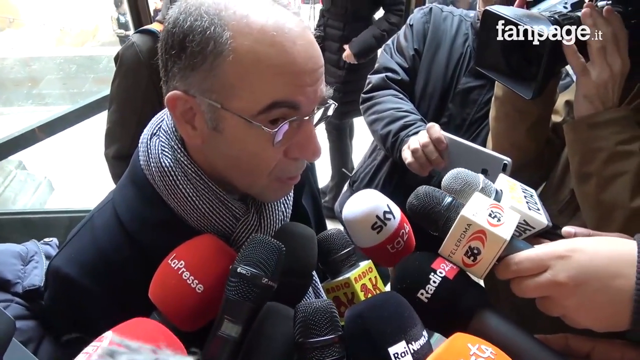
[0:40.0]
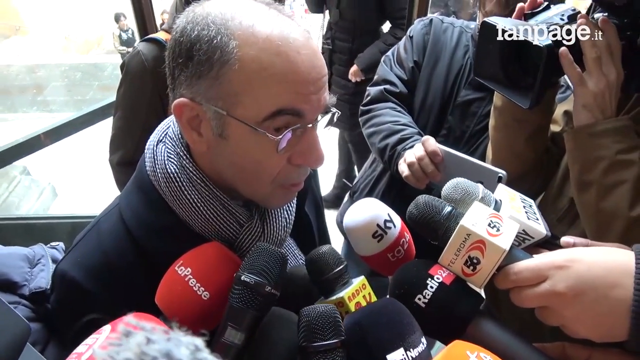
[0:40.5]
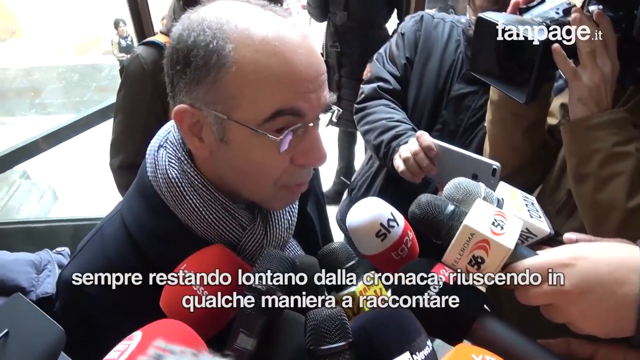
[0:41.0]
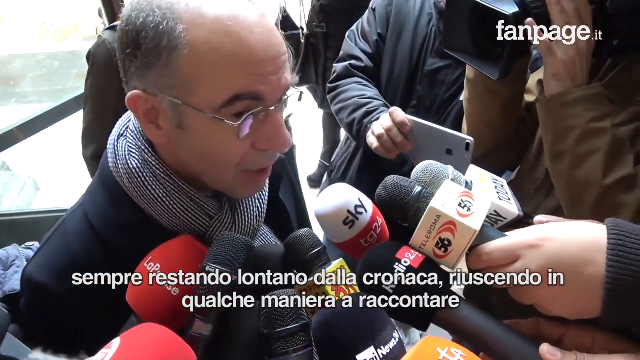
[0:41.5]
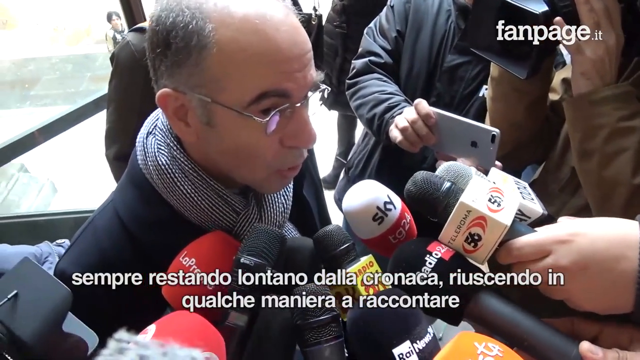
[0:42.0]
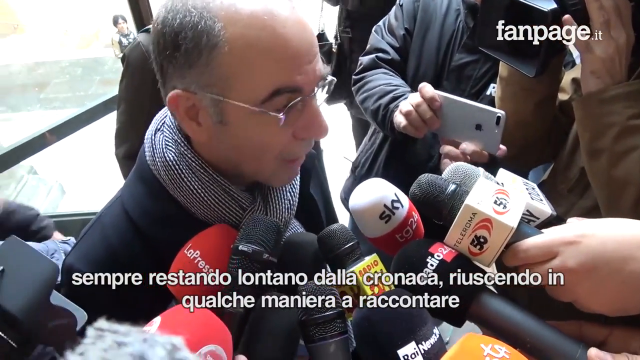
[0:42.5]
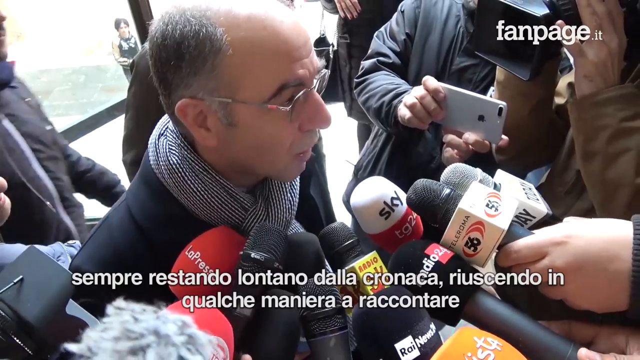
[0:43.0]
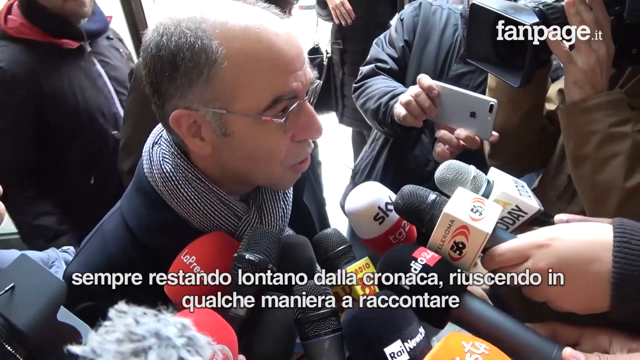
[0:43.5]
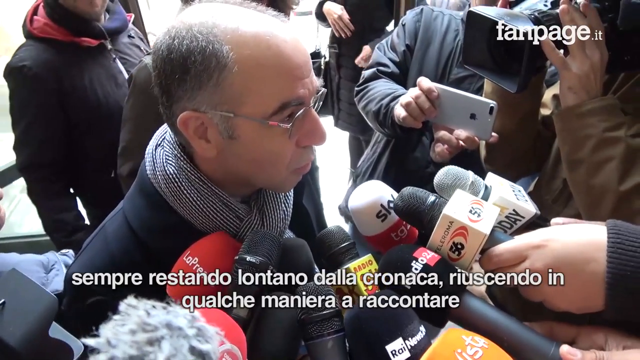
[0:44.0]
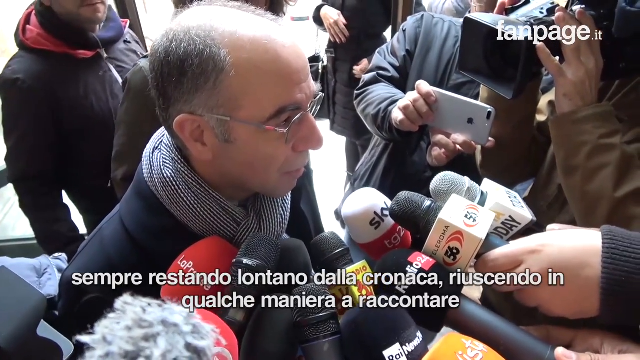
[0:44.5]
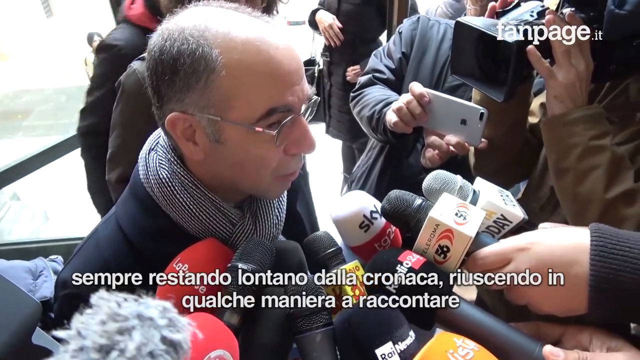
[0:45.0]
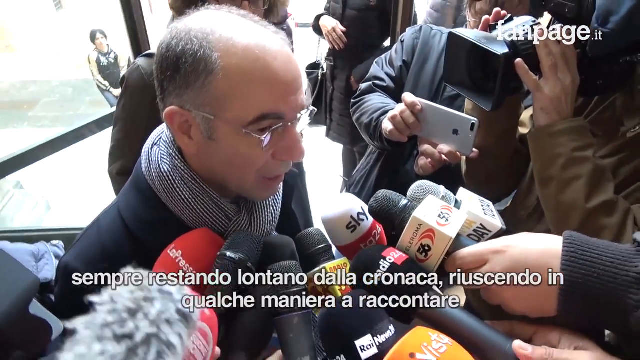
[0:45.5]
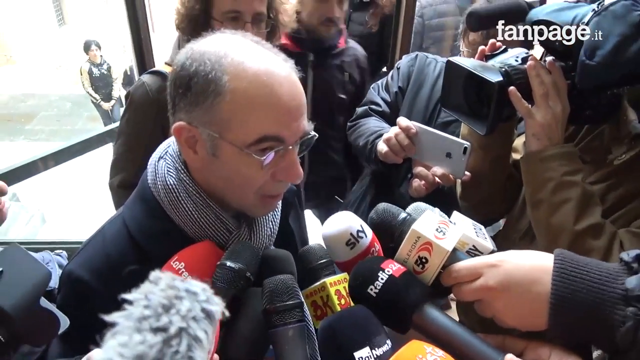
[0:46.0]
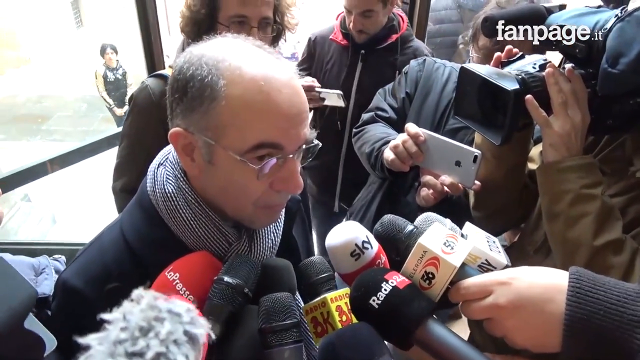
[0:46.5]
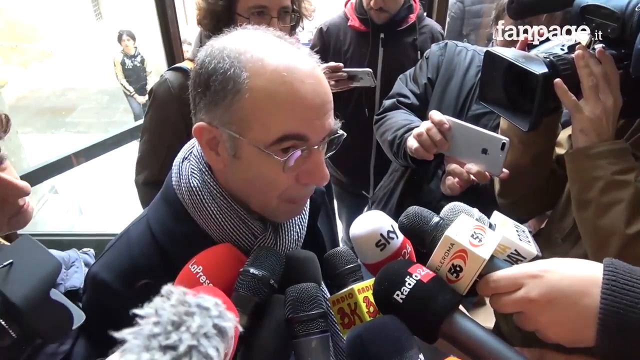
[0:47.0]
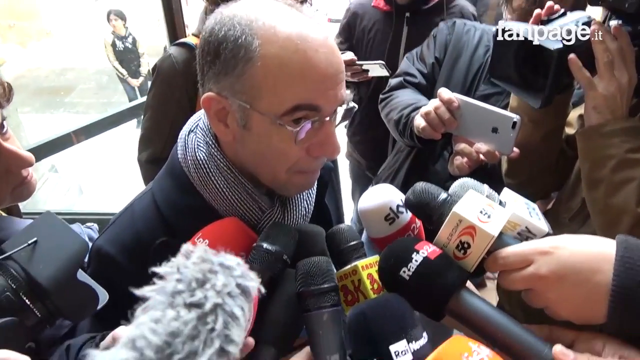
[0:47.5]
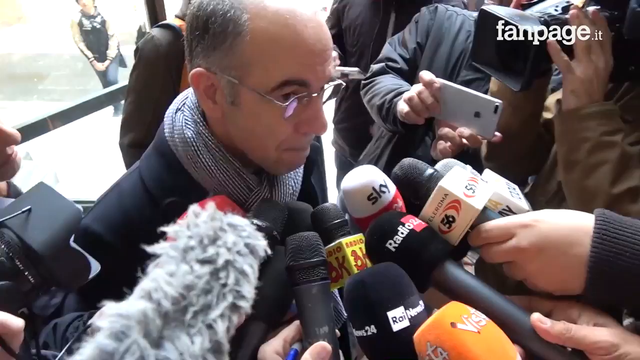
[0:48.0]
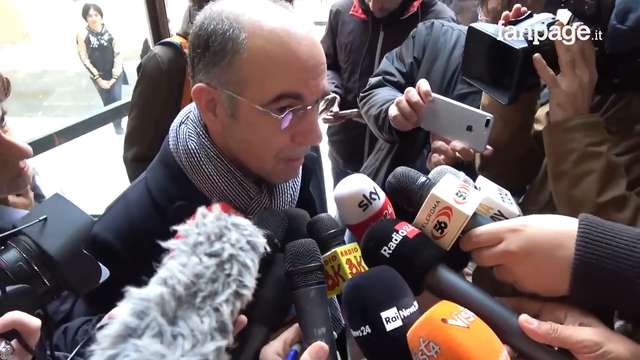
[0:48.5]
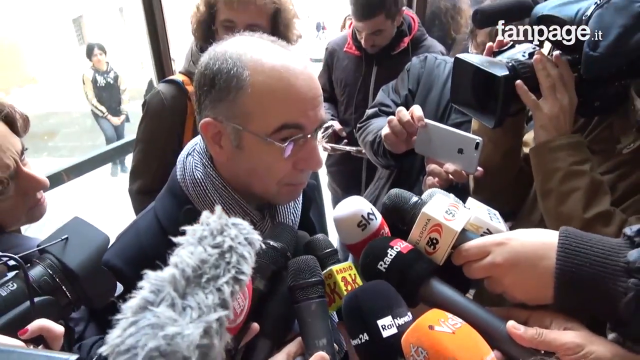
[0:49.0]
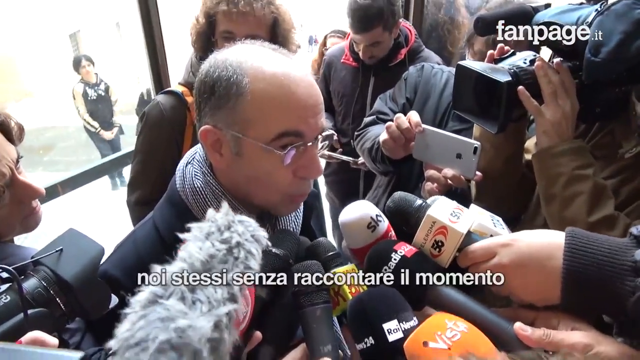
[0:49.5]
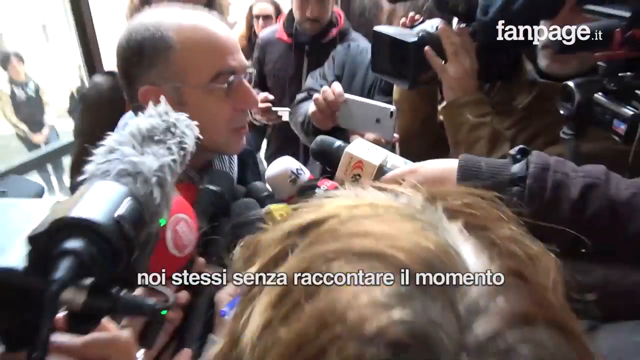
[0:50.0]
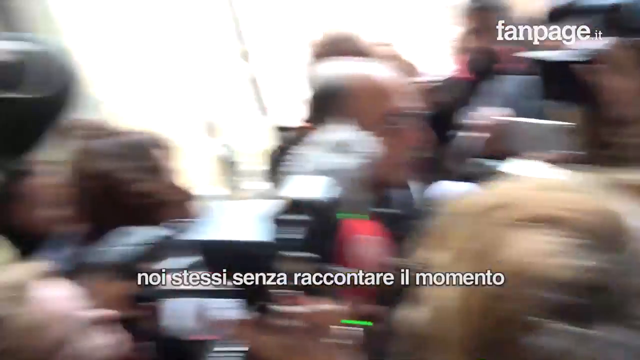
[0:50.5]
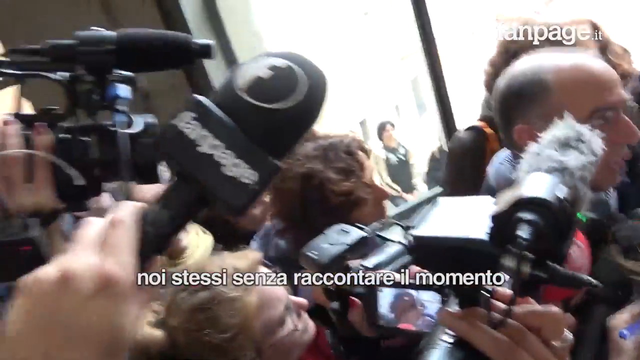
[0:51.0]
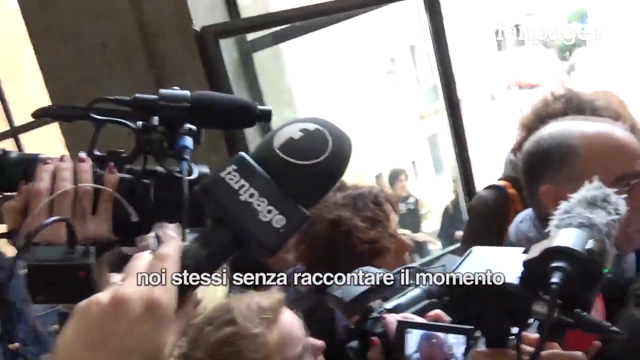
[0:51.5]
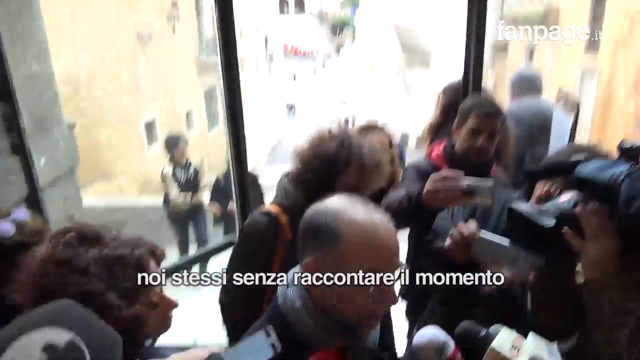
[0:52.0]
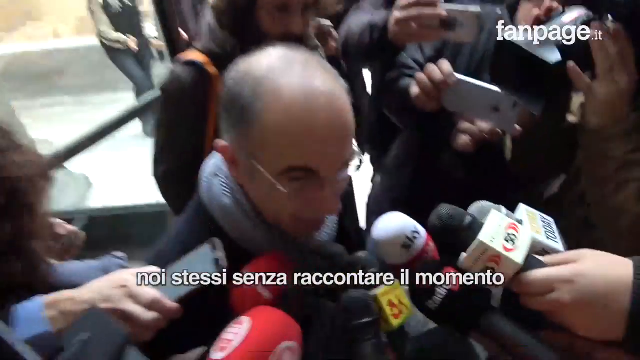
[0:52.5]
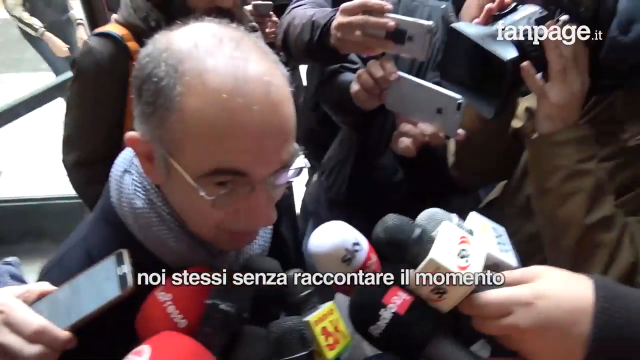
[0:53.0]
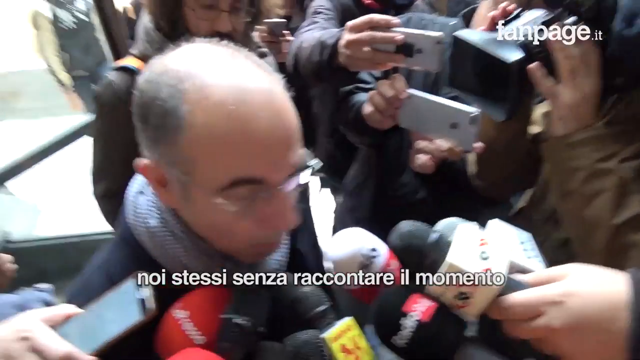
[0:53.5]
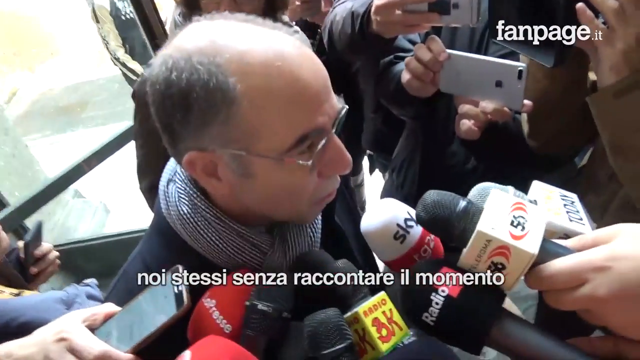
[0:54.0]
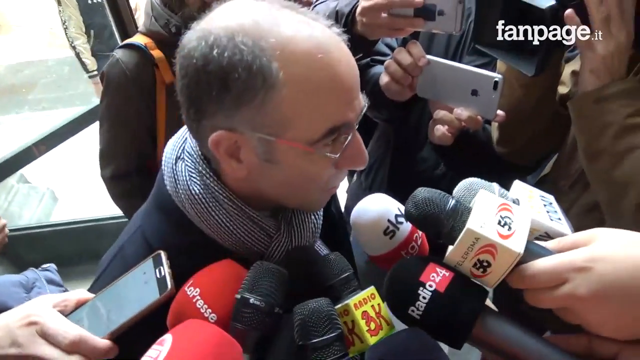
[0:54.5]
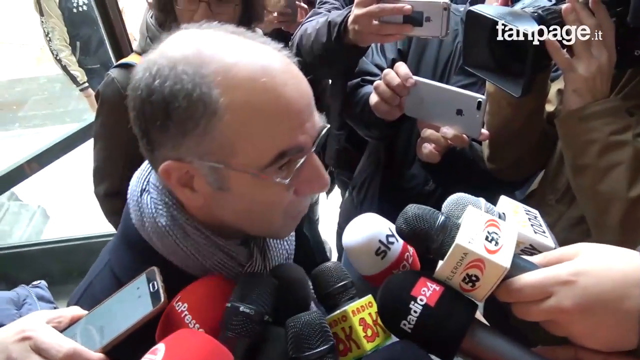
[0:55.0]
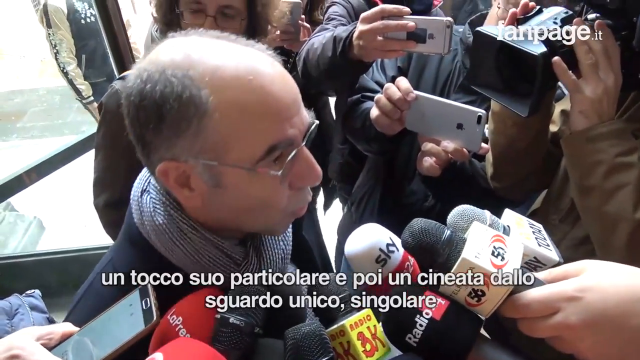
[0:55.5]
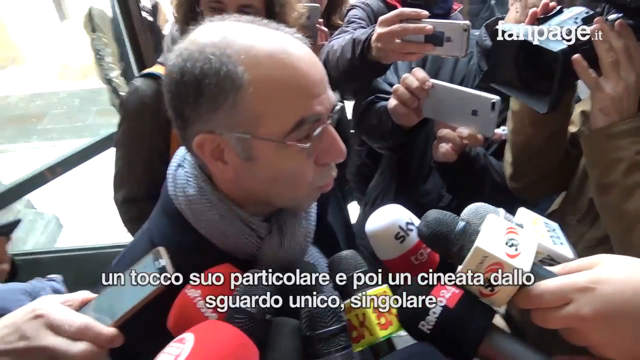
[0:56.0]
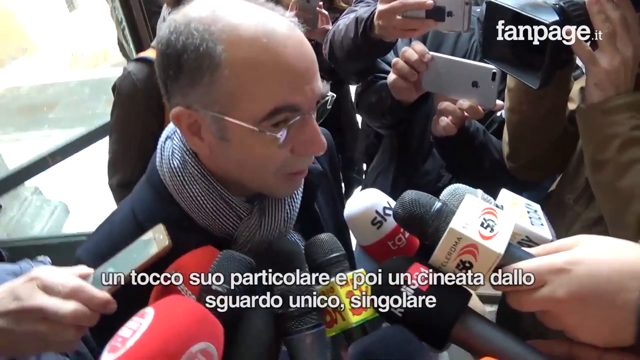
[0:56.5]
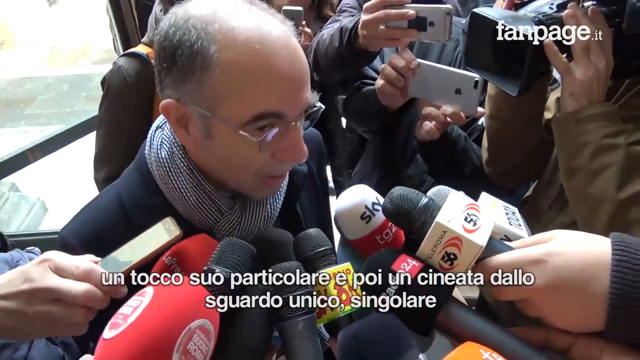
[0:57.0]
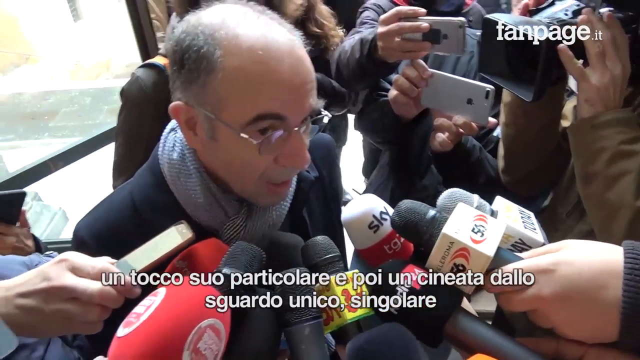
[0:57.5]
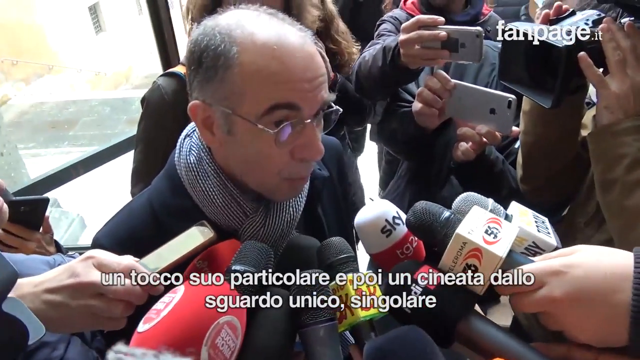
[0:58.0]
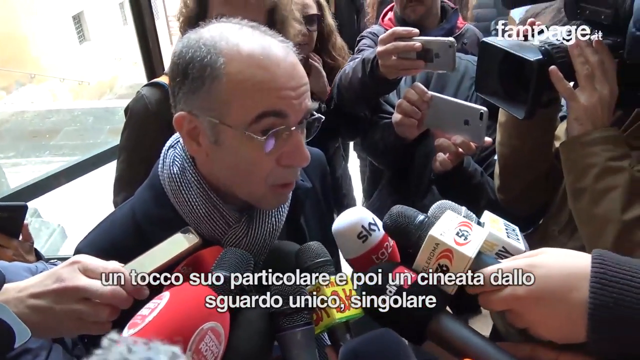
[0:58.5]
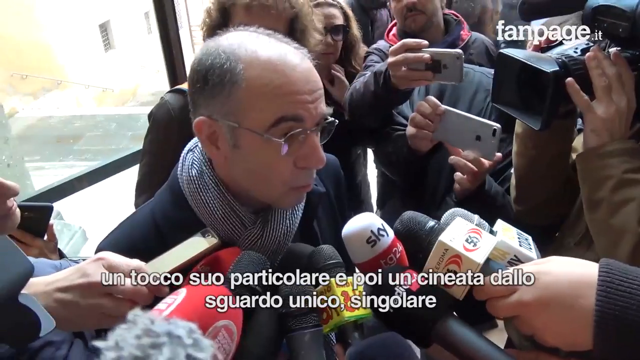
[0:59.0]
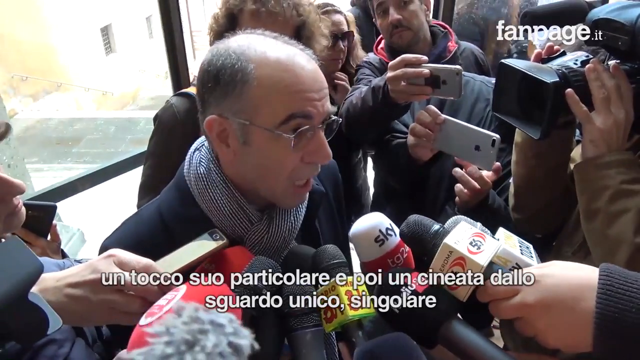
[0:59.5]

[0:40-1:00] The same man is shown: bald on top with hair on the sides of his head, wearing eyeglasses and a striped scarf around his neck. Many reporters are in front of him, with possibly more than 10 mics around him, and one person is taking video with a cell phone. An Italian translation appears at the bottom. The camera moves back and around, becoming somewhat out of focus for a moment, and then zooms back in. Labels on the mics show news agencies including "56", "Sky", "Radio 24" and "LAPRESSE".